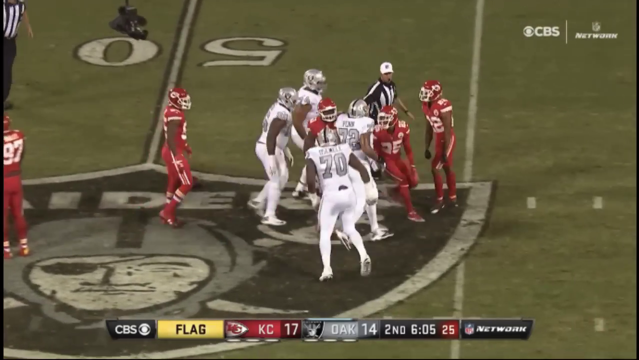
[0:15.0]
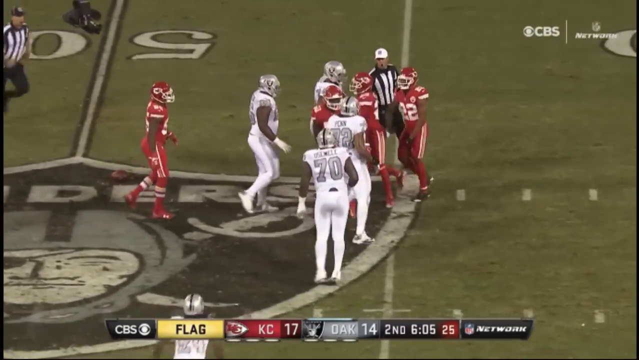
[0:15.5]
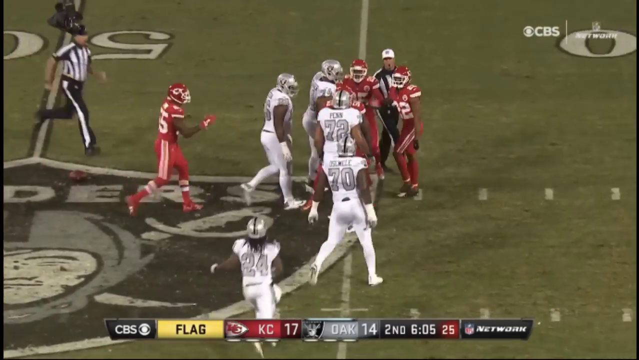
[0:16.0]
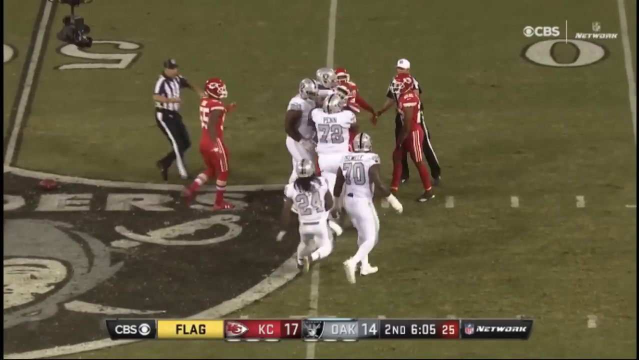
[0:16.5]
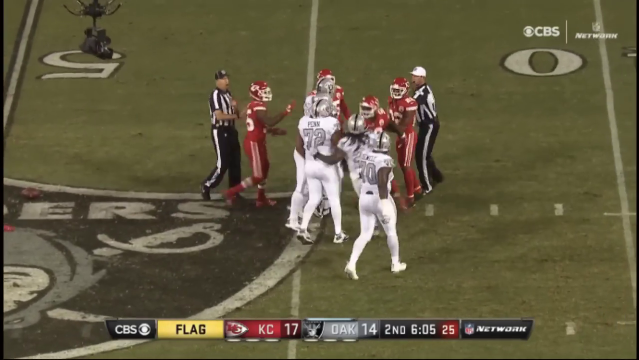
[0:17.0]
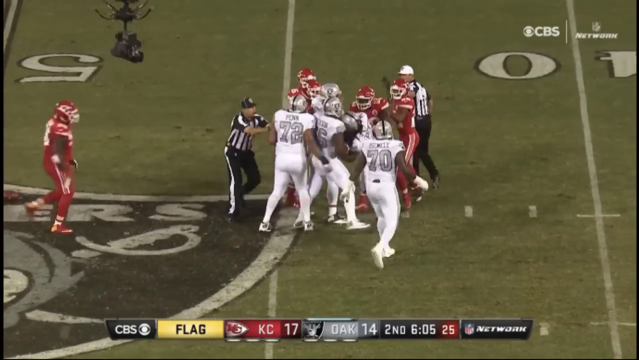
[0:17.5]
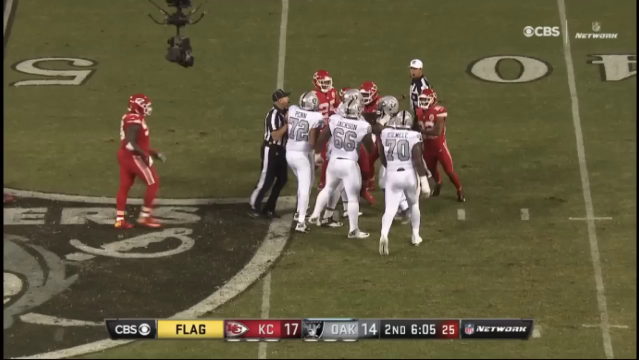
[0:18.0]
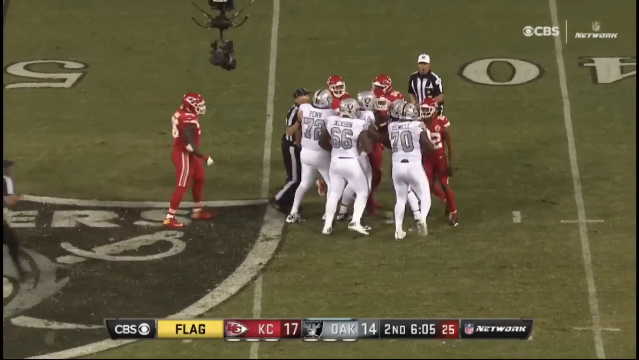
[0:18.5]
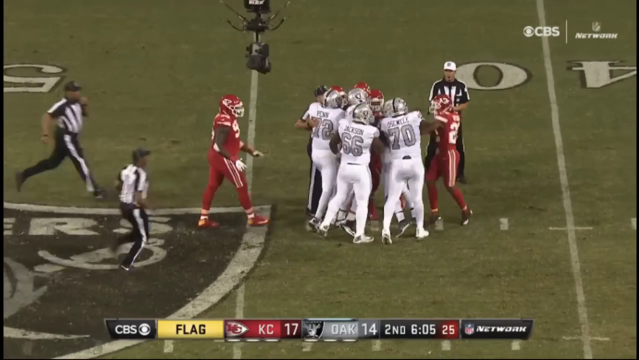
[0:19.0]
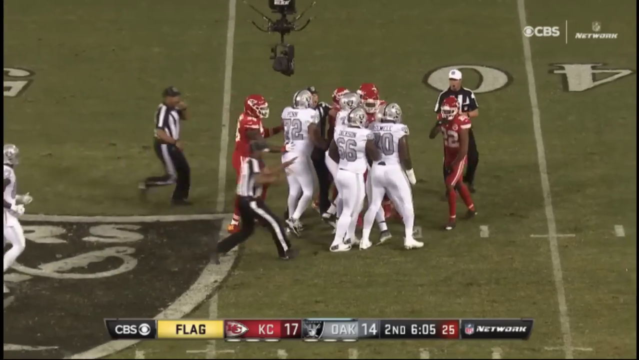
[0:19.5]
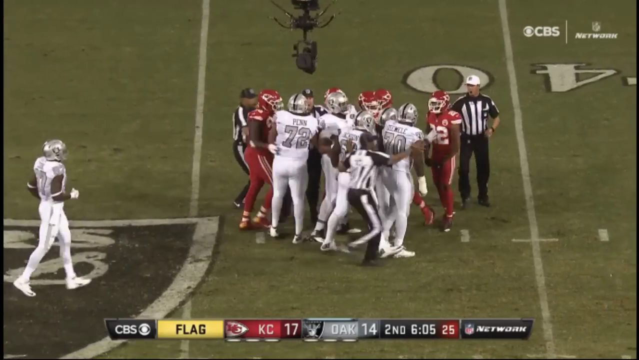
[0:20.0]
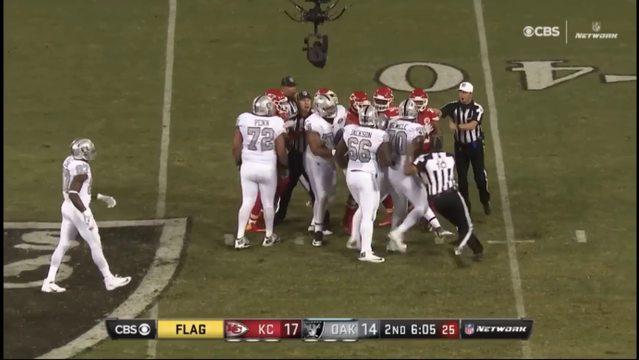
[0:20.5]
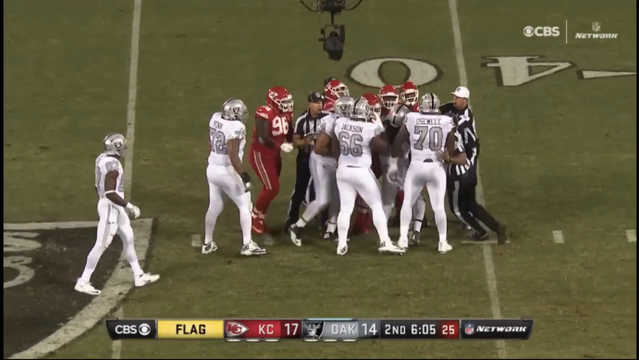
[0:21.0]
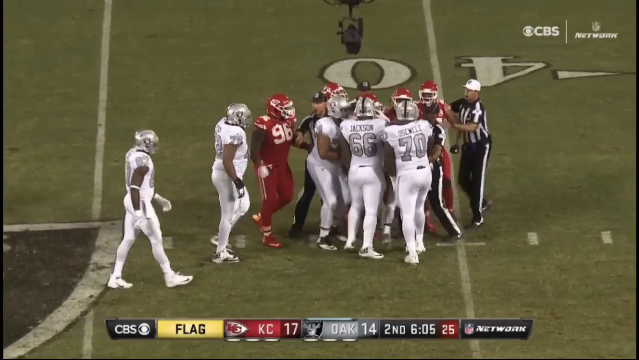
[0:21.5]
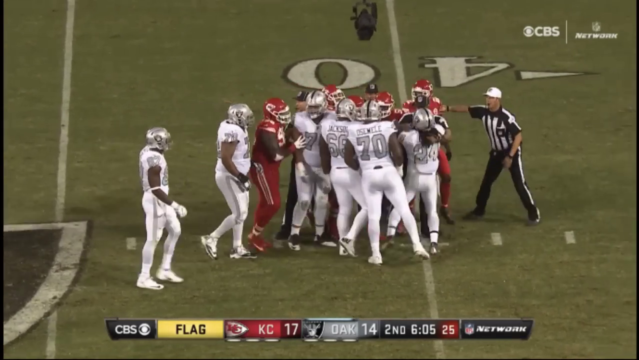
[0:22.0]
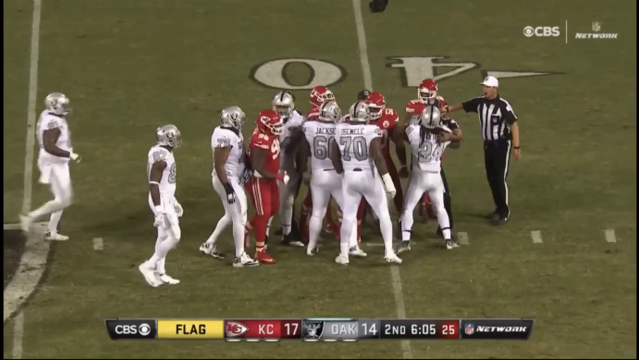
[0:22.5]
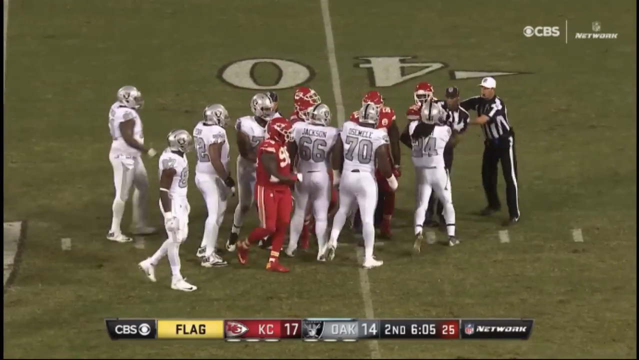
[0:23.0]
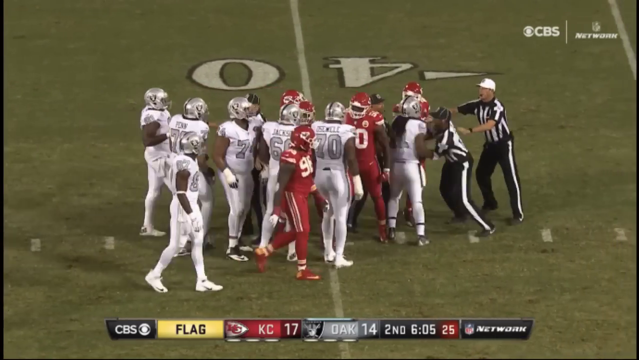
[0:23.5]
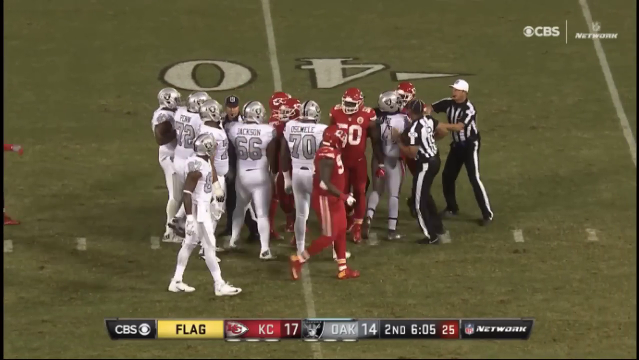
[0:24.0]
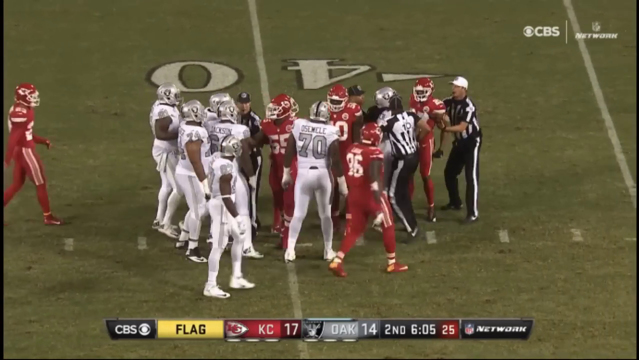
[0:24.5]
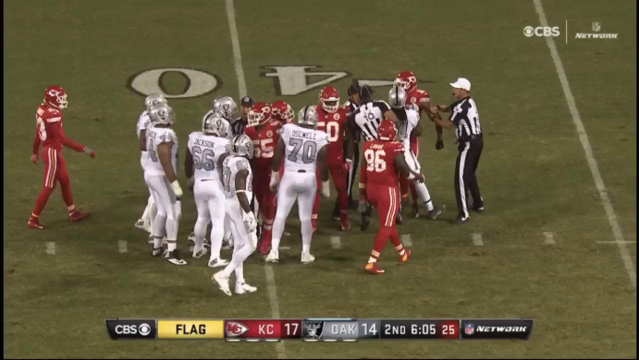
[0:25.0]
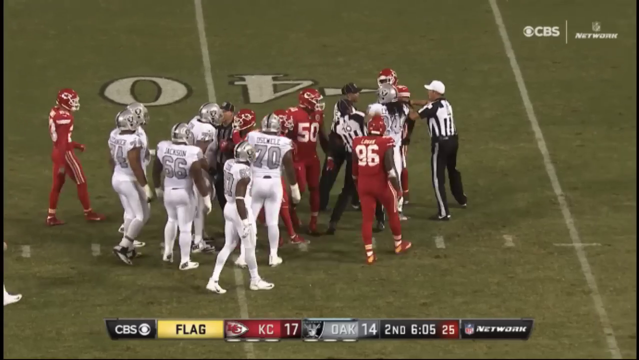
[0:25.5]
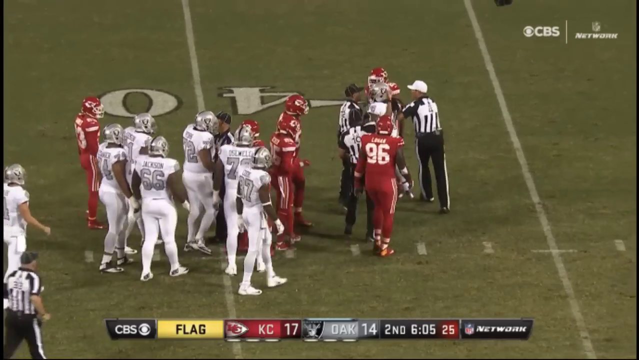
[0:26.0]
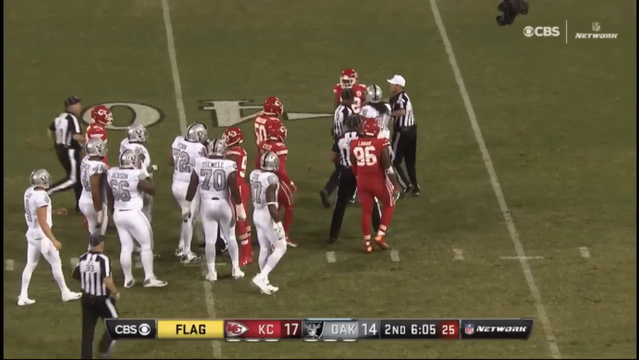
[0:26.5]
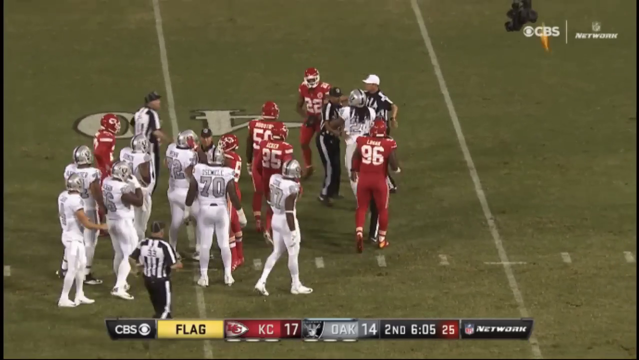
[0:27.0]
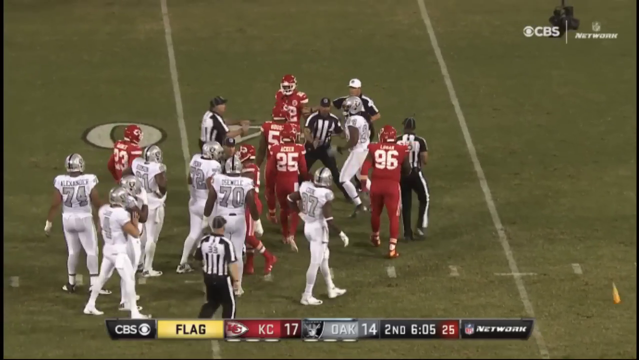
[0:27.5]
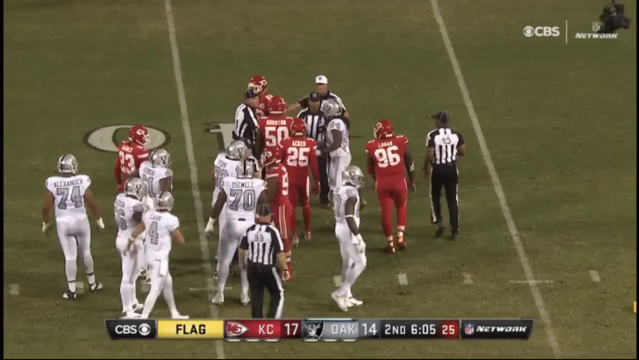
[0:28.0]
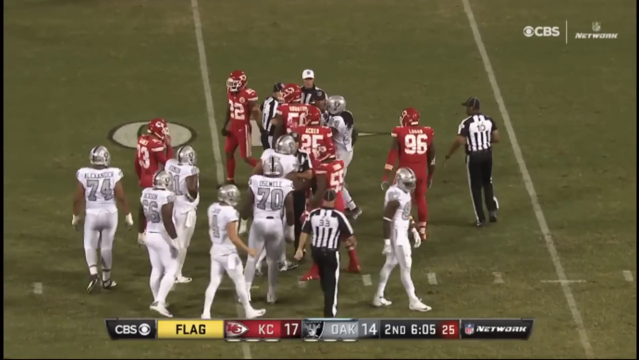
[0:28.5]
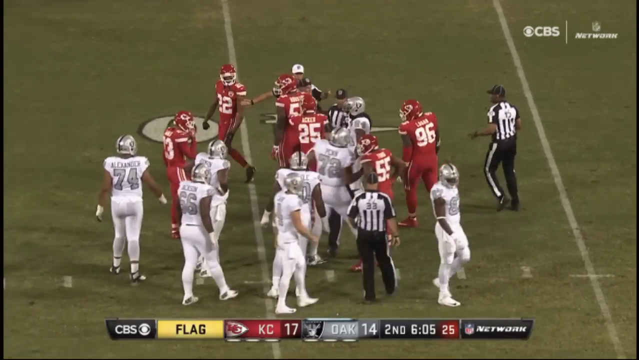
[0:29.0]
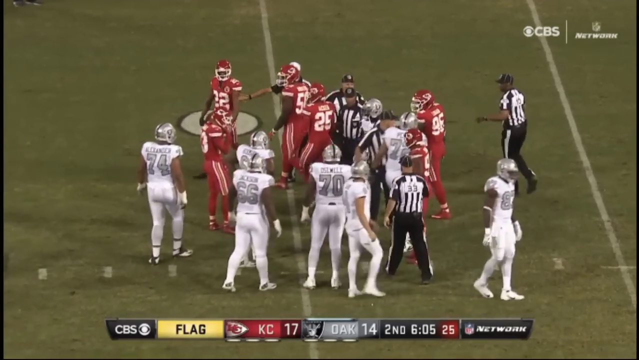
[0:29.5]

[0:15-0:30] The video is titled Marshawn Lynch gets ejected for grabbing a referee Chiefs vs Raiders NFL. It shows a play where the referees have to get involved because Chiefs and Raiders players are in an altercation. A referee throws a yellow flag, and more referees come onto the field to break up a fight. Raiders player number 24 walks off the field as more referees discuss how to deal with the altercation. The video goes into a split screen showing the actual play and the initial altercation between the Chiefs and the Raiders. The scoreboard shows Kansas City Chiefs 17, Oakland Raiders 14, it is second down, and the game is playing on CBS. On the right side of the split screen, Raiders number 24 pushes one of the referees, who throws out a yellow flag. The video returns to a single screen showing several referees speaking in a huddle, then zooms in on Lynch, number 24 on the Raiders, along with the coaches. Finally, one of the referees comes onto the field and shows with hand signals what they are calling on the play.